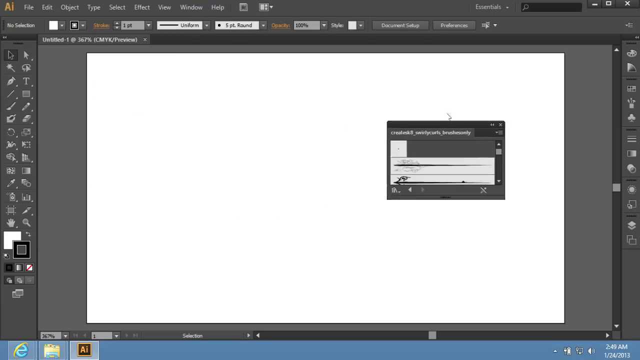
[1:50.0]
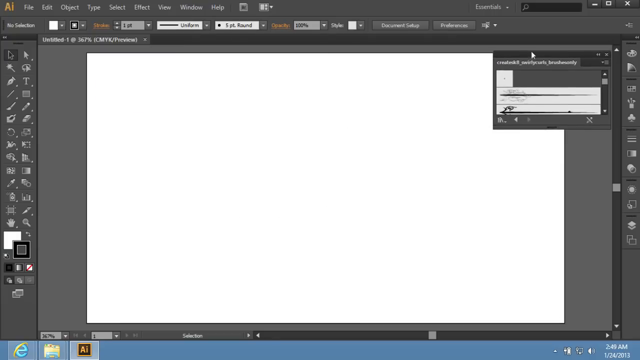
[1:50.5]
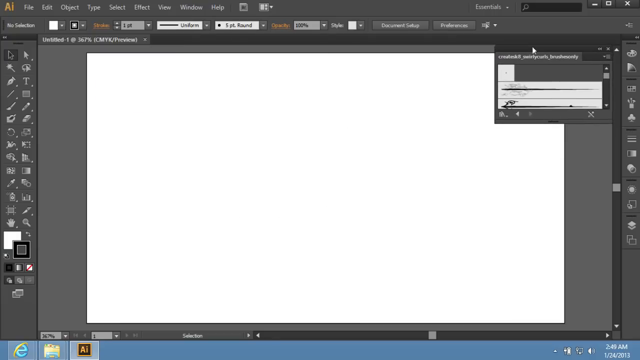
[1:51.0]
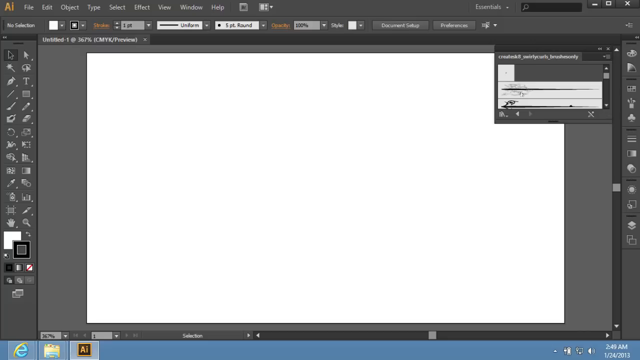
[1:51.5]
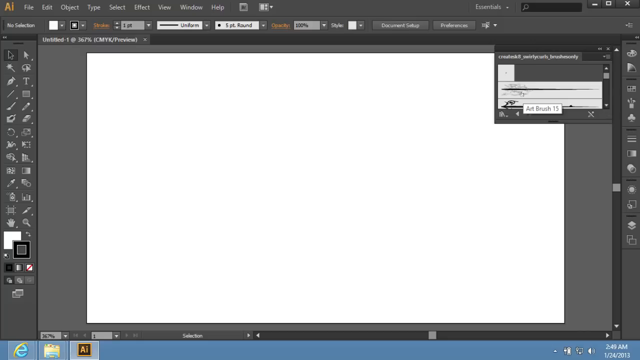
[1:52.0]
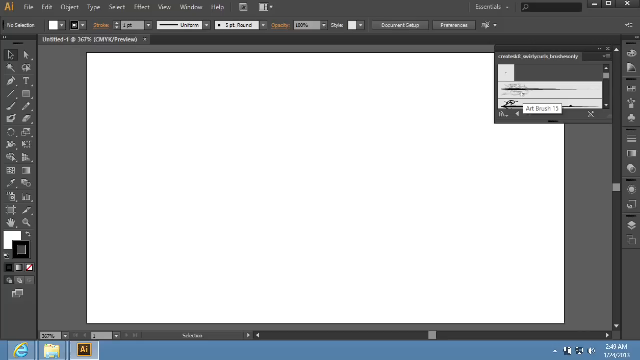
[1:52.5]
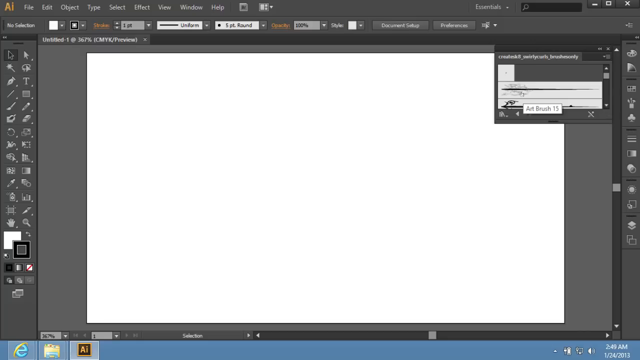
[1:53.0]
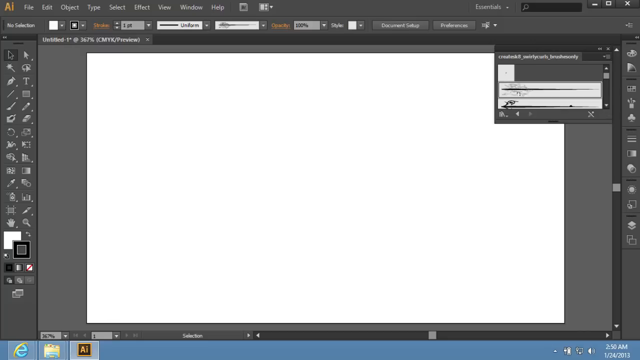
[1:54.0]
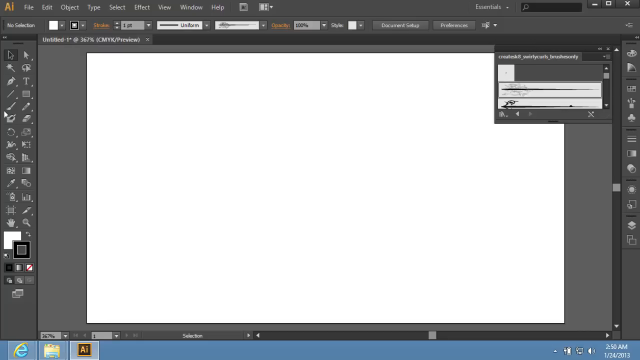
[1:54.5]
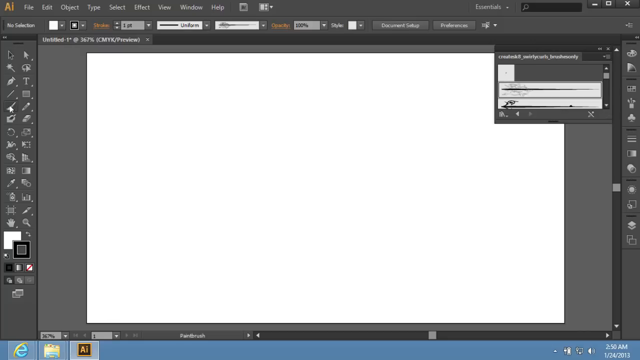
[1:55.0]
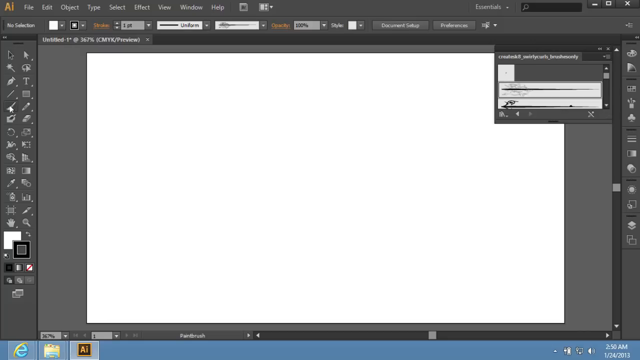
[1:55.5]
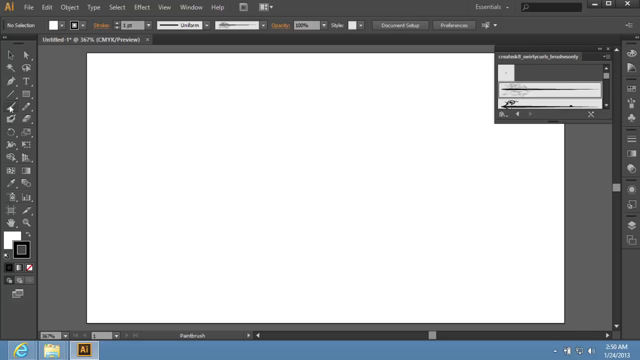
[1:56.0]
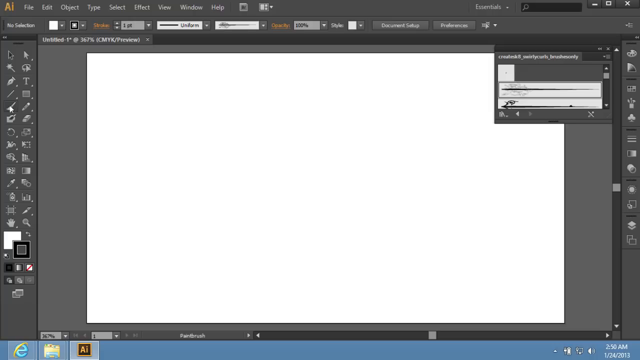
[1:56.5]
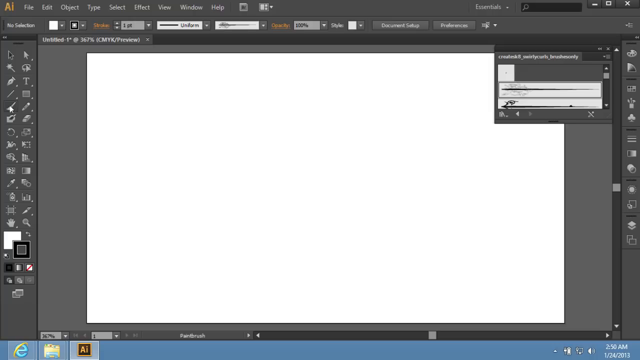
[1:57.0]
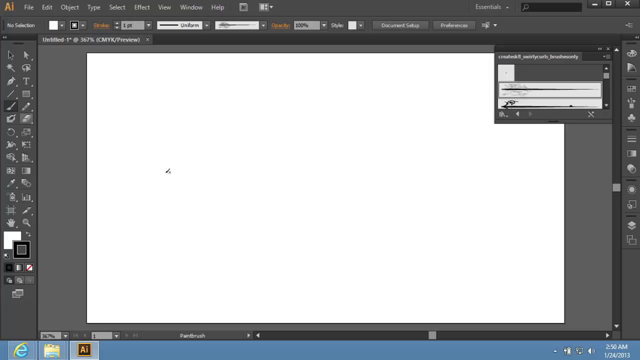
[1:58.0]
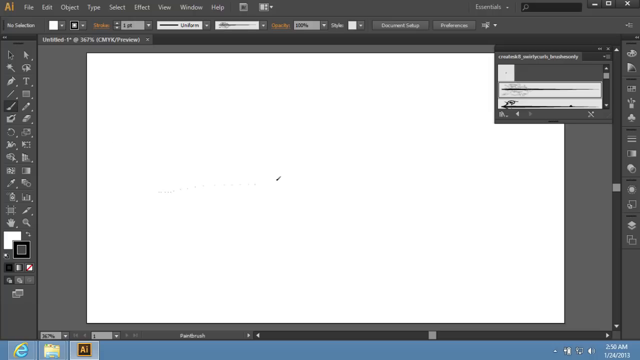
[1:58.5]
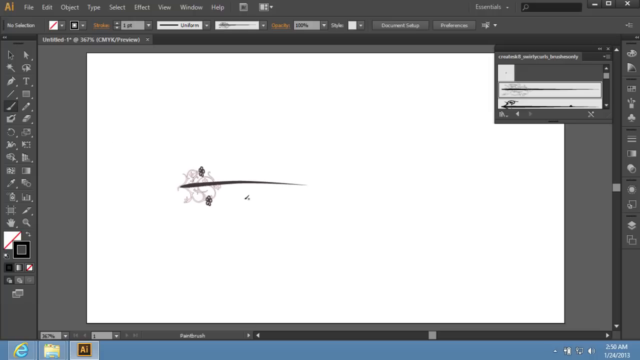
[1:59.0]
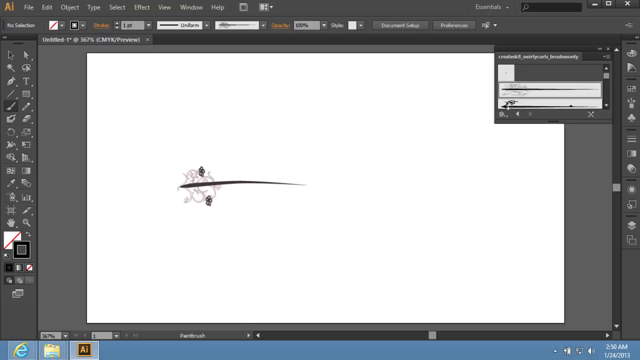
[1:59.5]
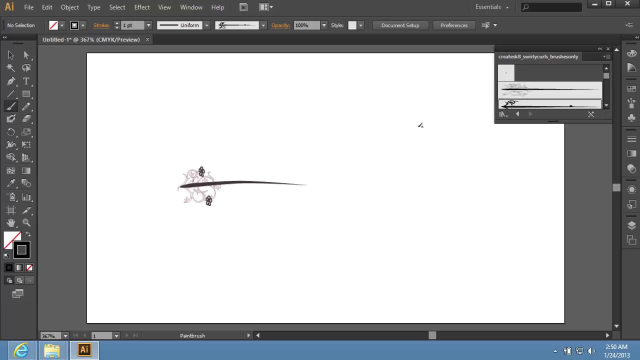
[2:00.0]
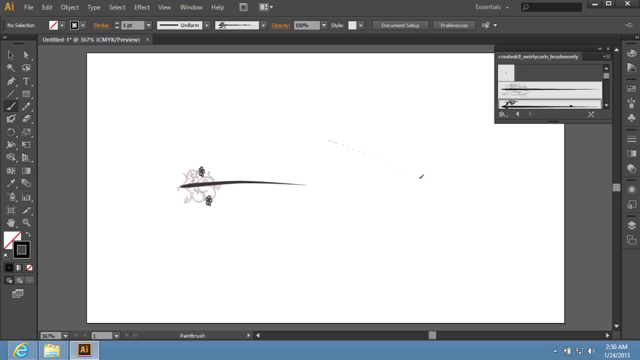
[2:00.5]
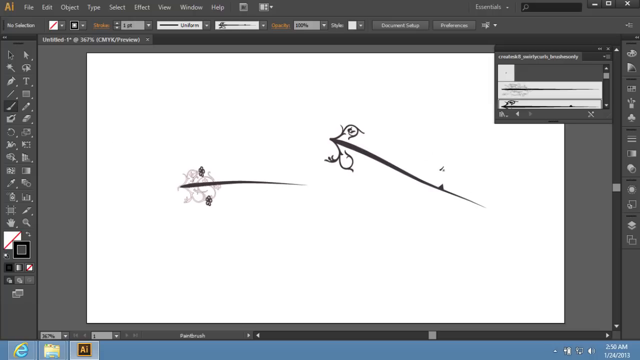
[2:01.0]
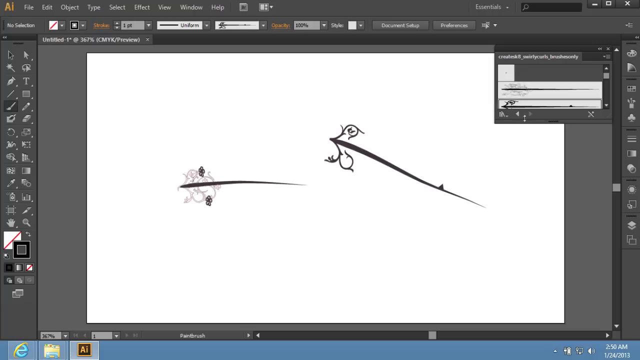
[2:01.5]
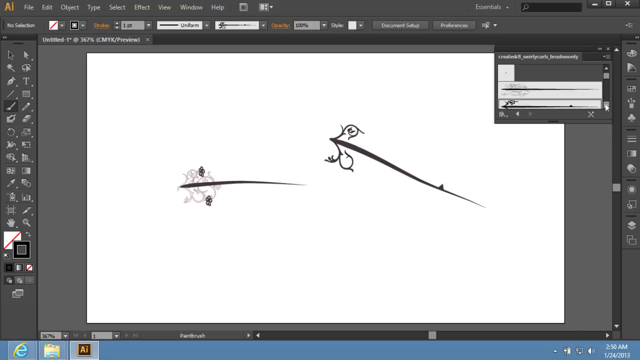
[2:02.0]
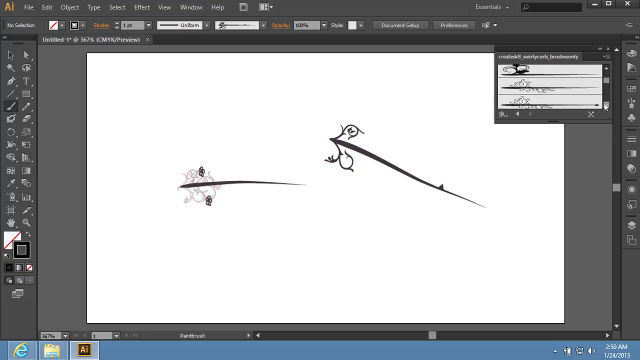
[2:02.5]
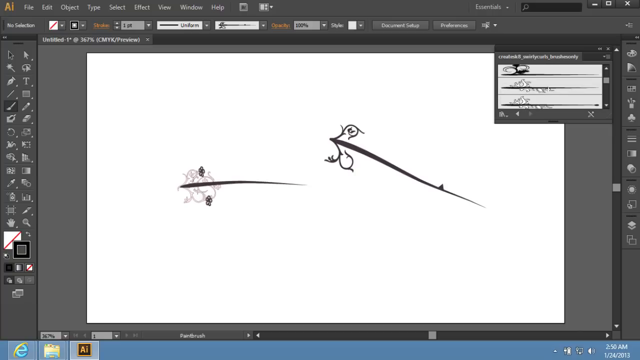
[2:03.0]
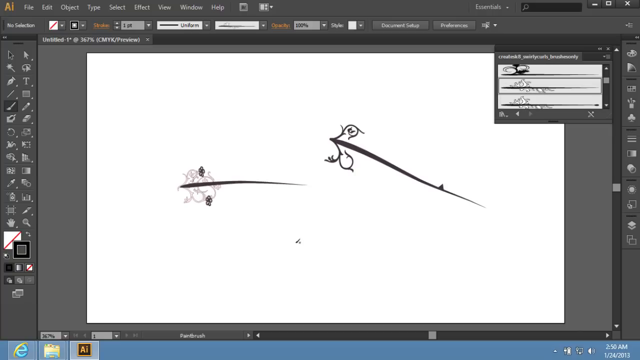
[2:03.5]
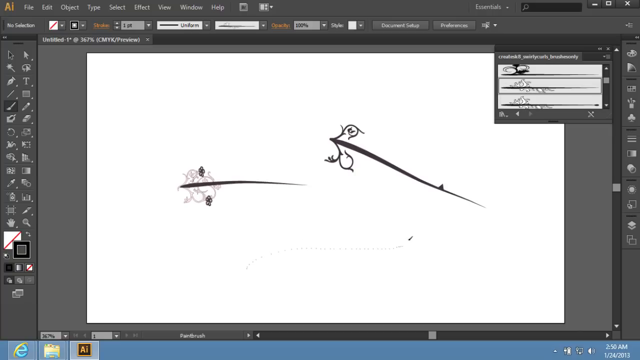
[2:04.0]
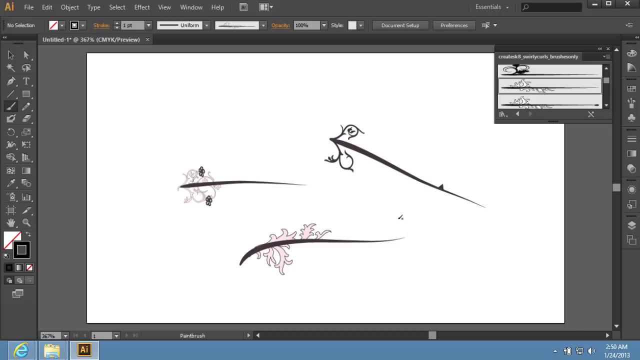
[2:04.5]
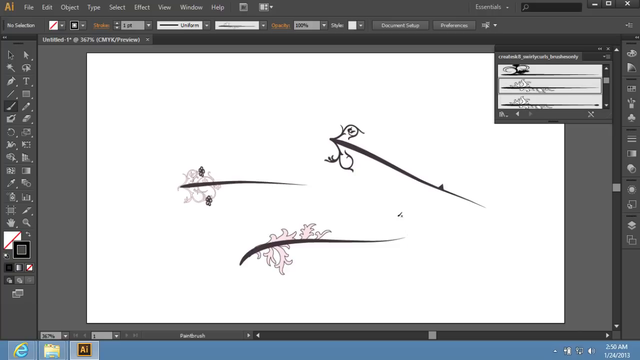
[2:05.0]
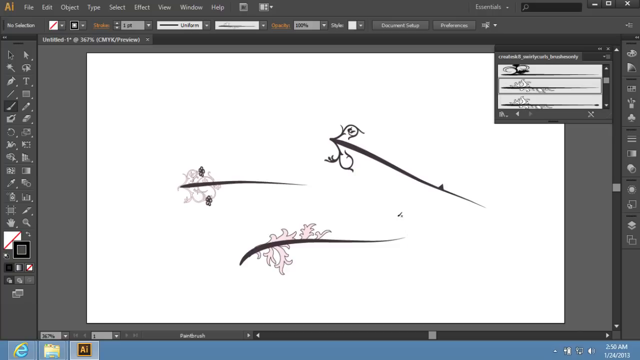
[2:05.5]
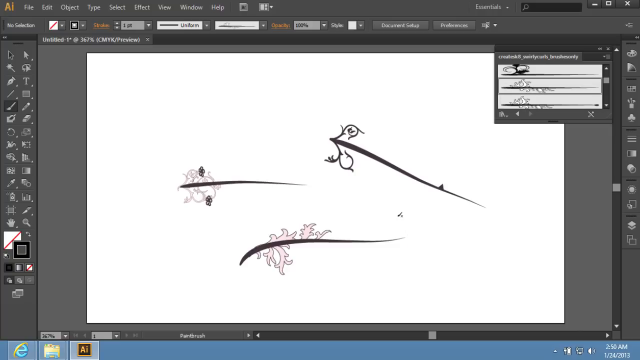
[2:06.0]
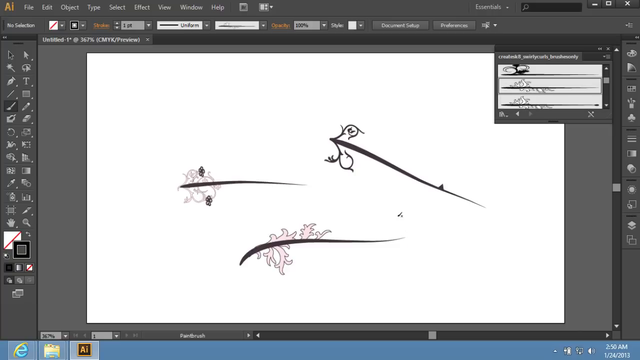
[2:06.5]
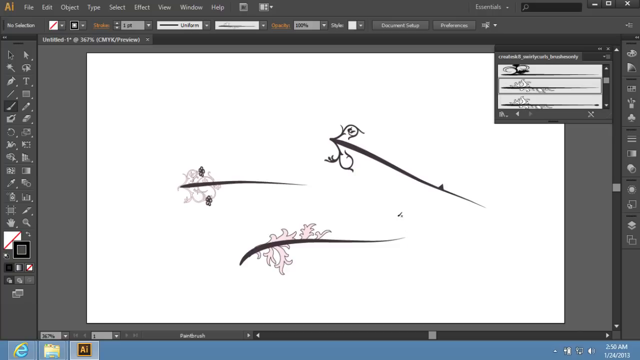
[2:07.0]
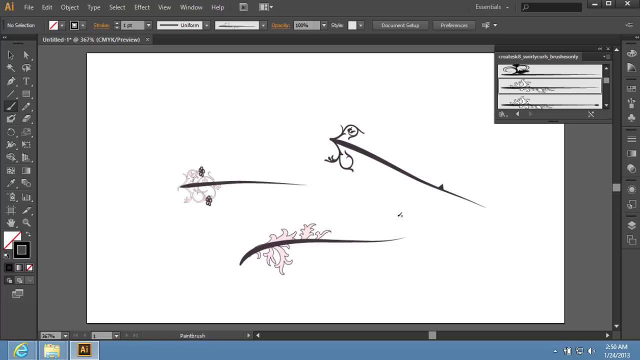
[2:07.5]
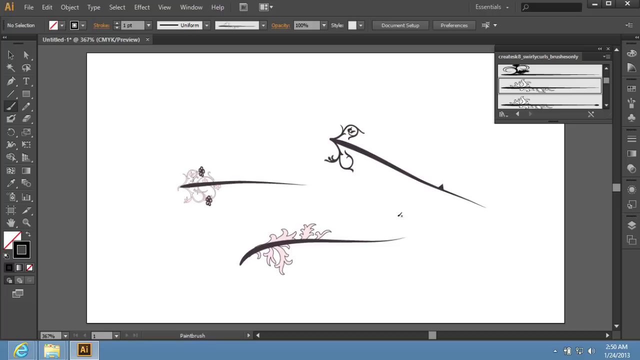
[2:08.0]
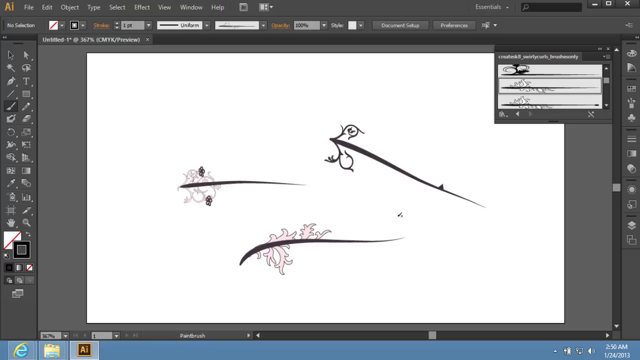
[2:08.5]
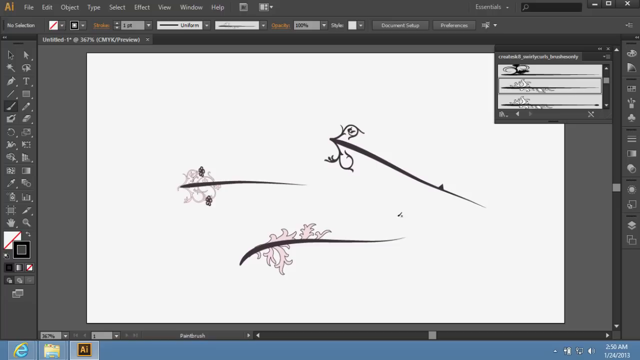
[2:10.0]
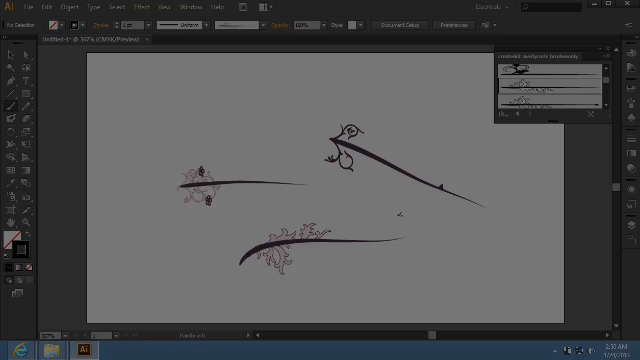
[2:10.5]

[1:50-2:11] The Adobe Illustrator window is still on screen, now with a palette containing different brush types, apparently the newly installed brushes. The person selects a tool from the tool palette on the left, then on the new document draws shapes that end in all sorts of swirls and curls, apparently using the Swirly Curls brush set. The video then fades to black.